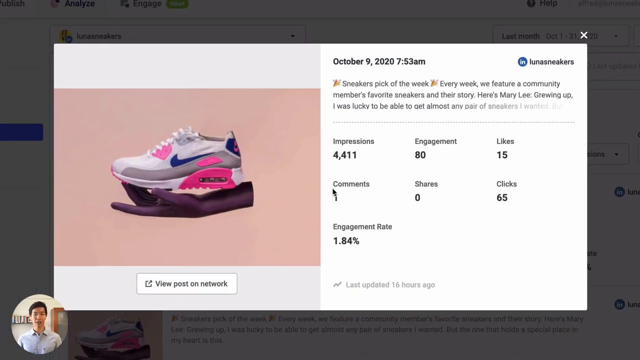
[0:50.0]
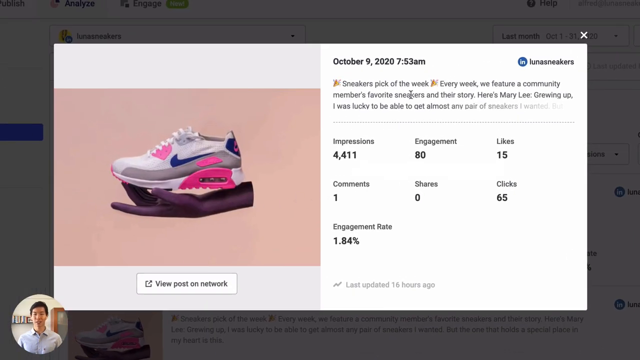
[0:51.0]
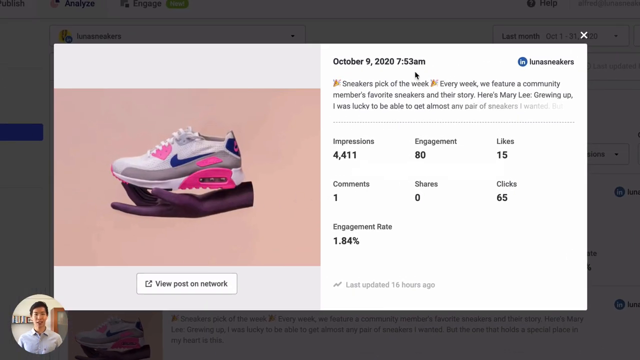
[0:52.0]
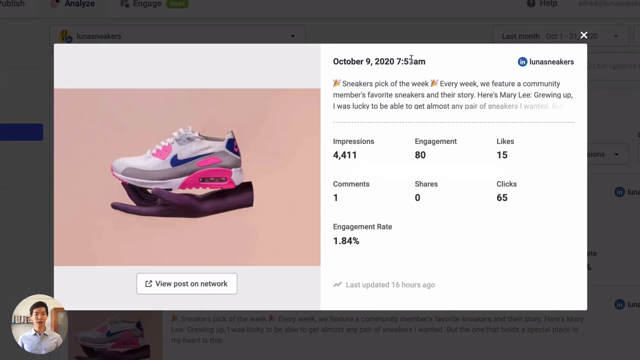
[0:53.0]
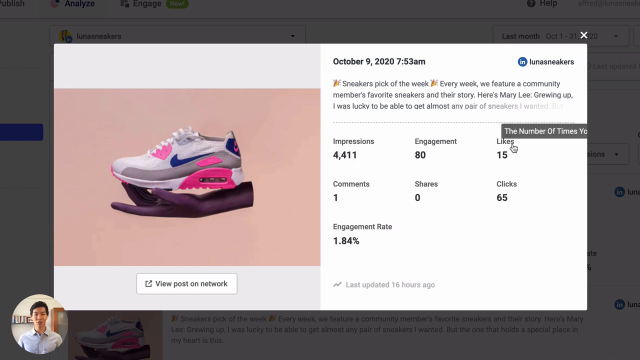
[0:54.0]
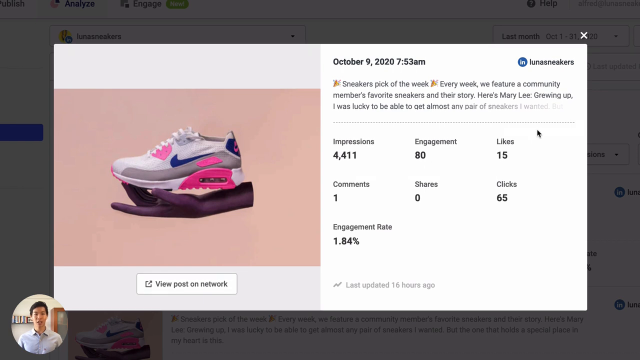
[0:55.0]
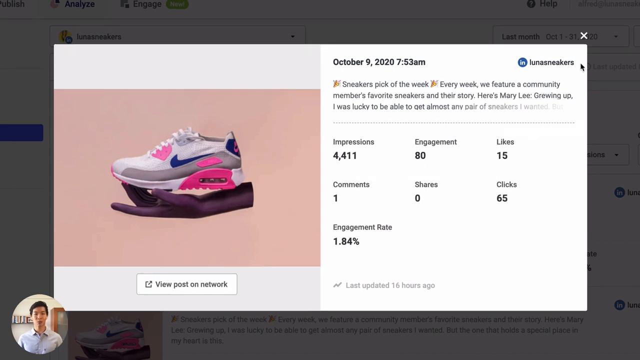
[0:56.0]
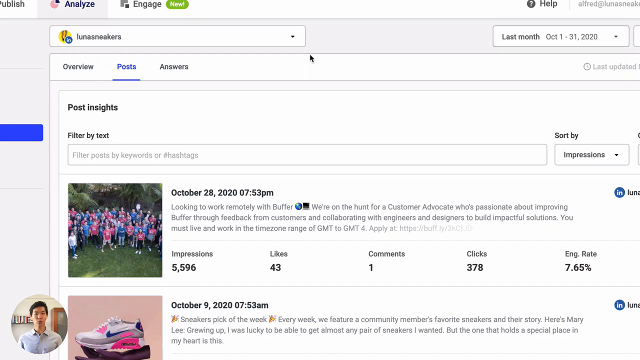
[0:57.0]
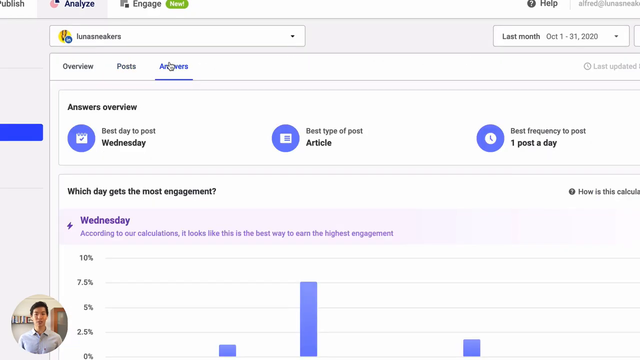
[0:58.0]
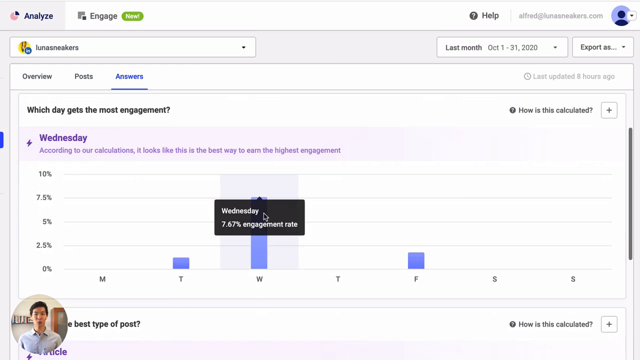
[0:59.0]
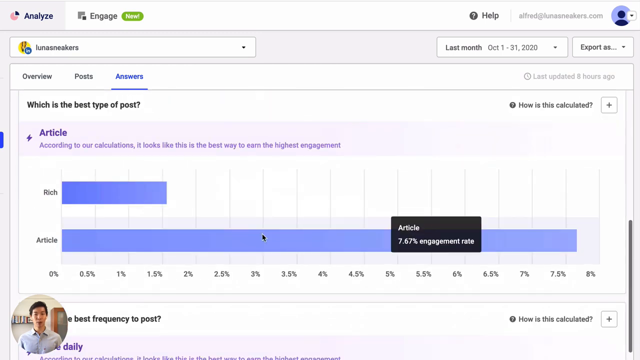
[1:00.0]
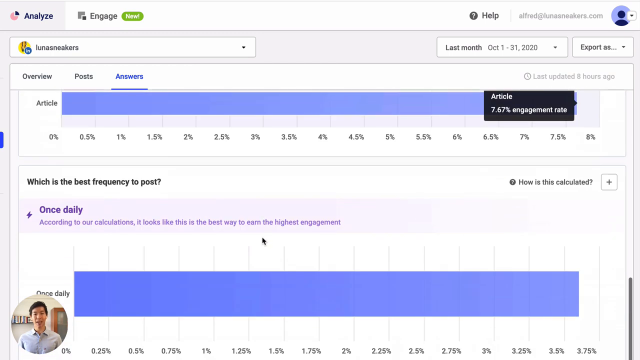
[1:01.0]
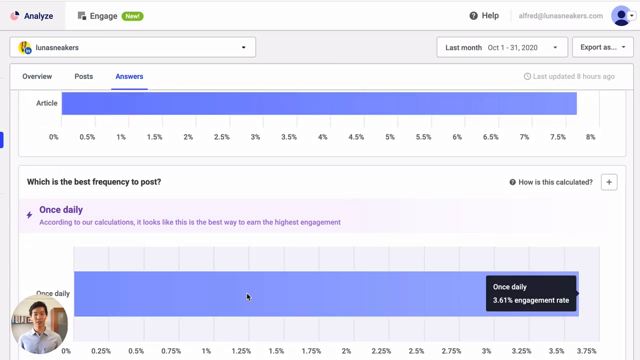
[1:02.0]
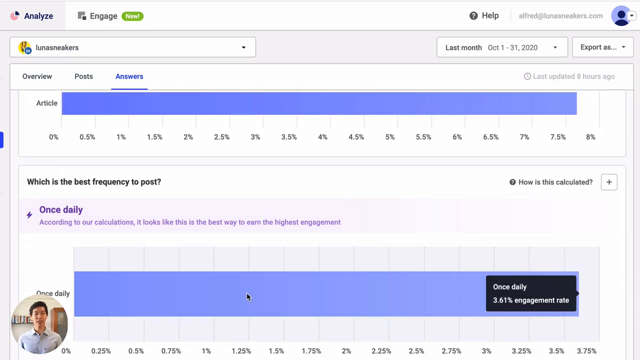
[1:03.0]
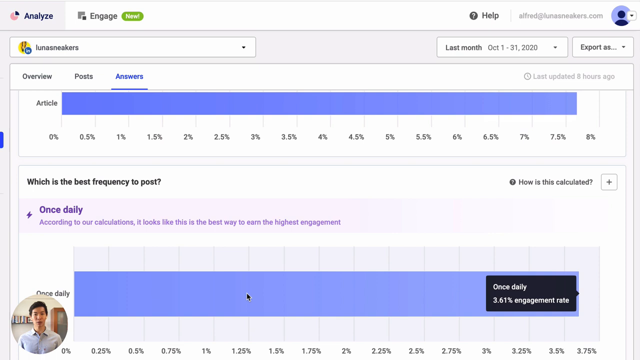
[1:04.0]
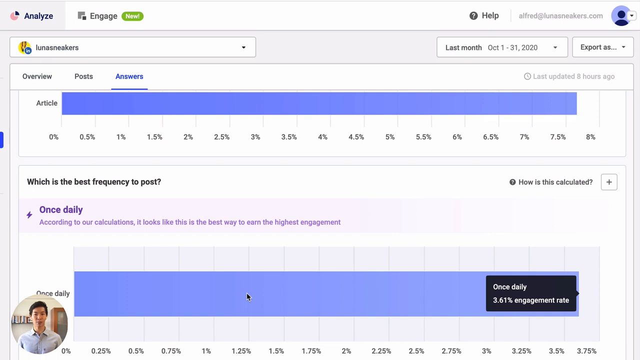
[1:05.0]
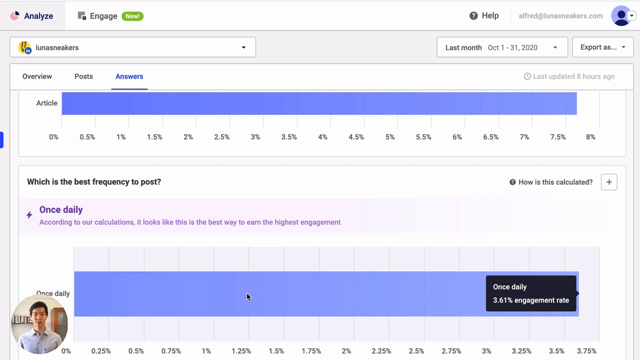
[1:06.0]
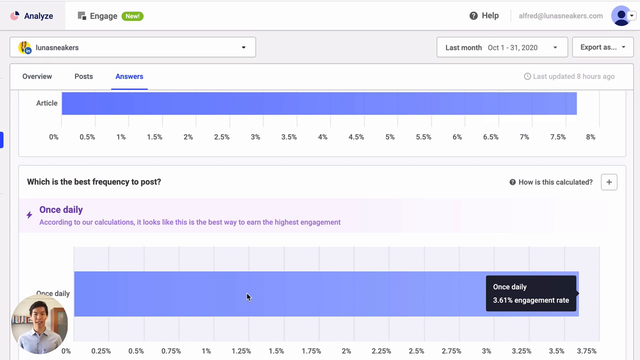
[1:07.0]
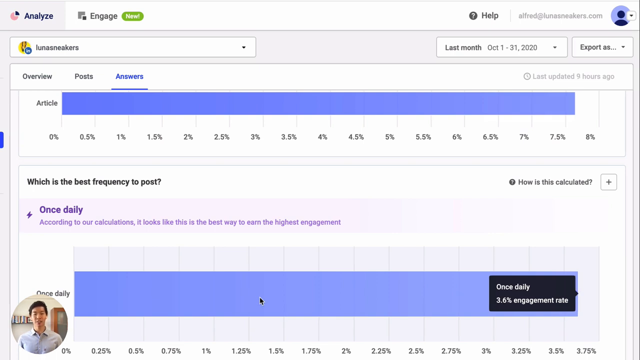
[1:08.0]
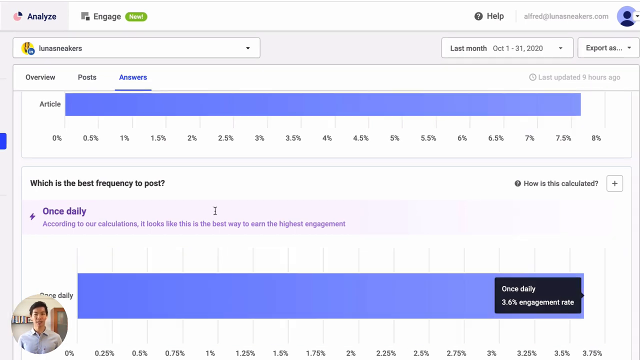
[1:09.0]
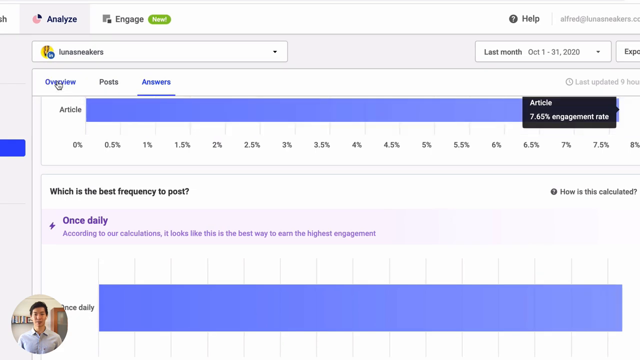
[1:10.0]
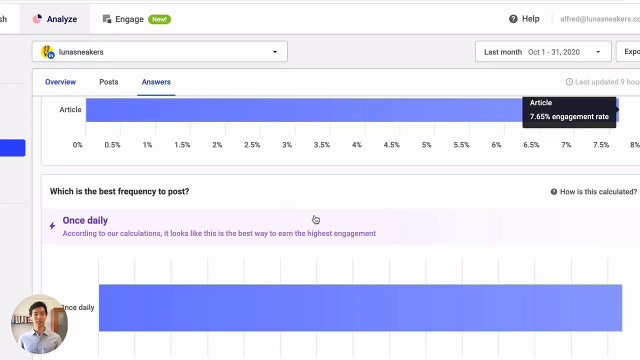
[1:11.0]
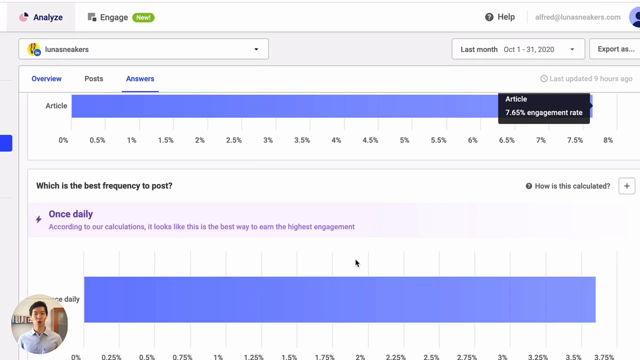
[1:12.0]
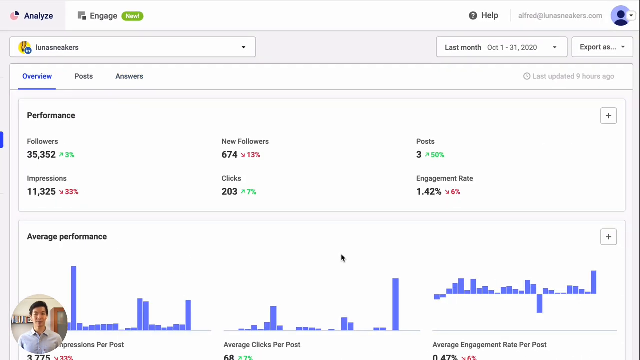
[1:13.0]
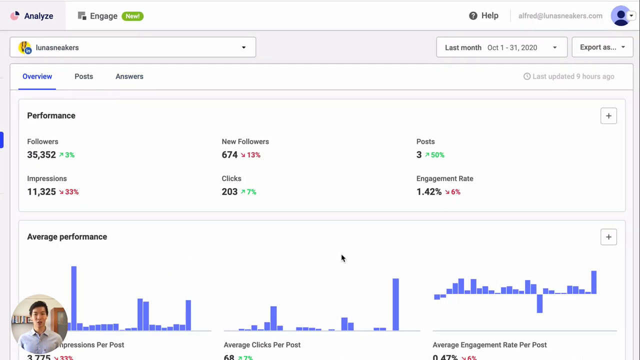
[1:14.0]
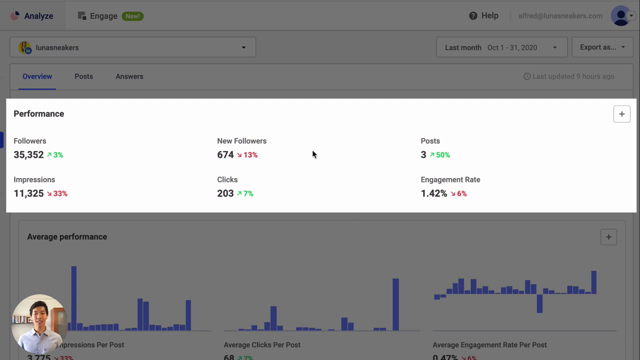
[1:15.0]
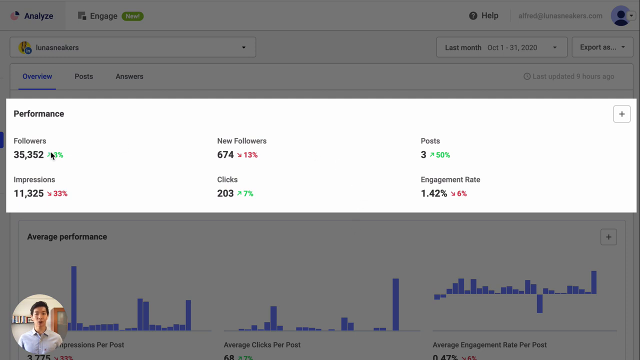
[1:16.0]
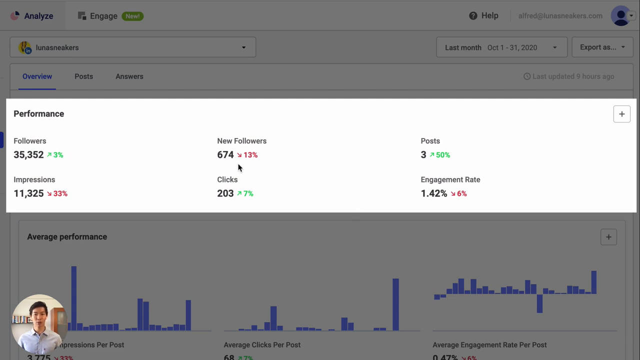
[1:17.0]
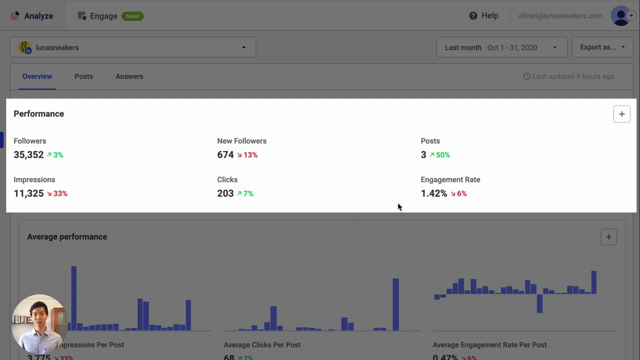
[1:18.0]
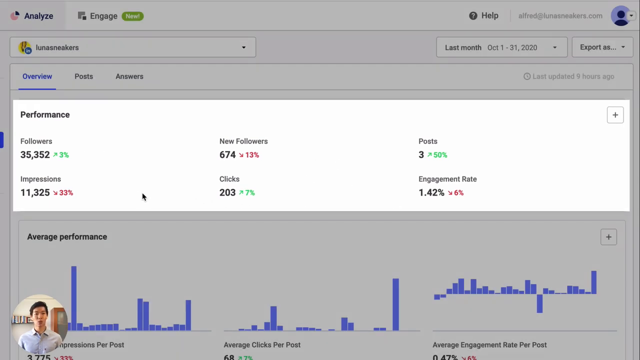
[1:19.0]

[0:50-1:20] The pop-up window darkens the background and takes up almost the entire screen, showing the post that was clicked. Taking up the left half of the pop-up is a picture of a dark purple-brown hand holding a white, gray, pink and navy blue Nike athletic running shoe against a salmon-like tan background. On the right are the date and time, who posted it on LinkedIn, the post itself, and the engagement and some analytics. The cursor hovers over the time, then quickly moves down and exits the pop-up. The mouse then clicks on another tab and quickly scrolls down, revealing more analytics in bar-graph-like charts and percentages. Finally, the mouse clicks on overview again and highlights performance, bringing up a pop-up.